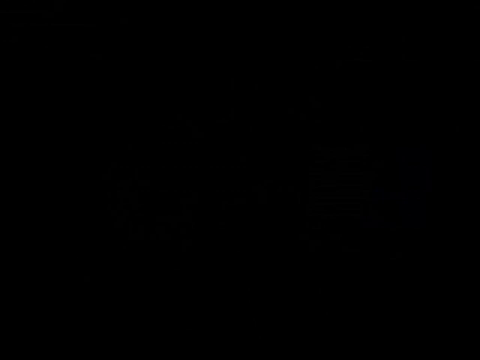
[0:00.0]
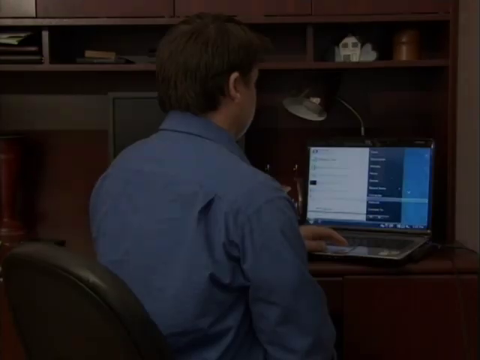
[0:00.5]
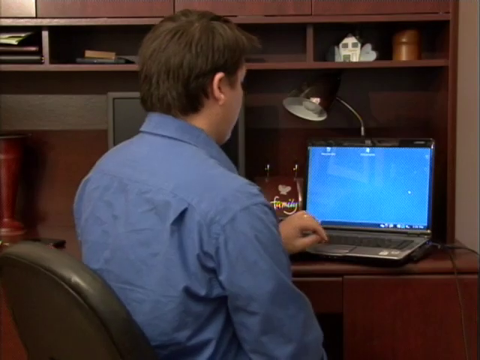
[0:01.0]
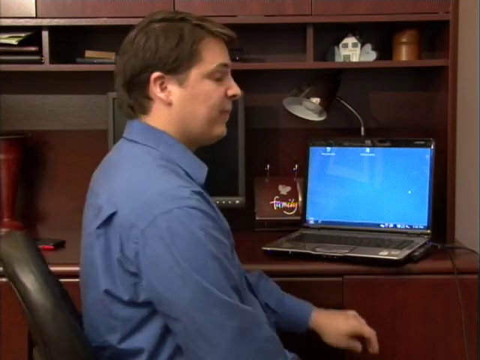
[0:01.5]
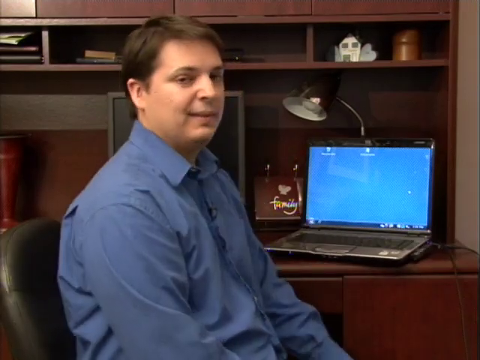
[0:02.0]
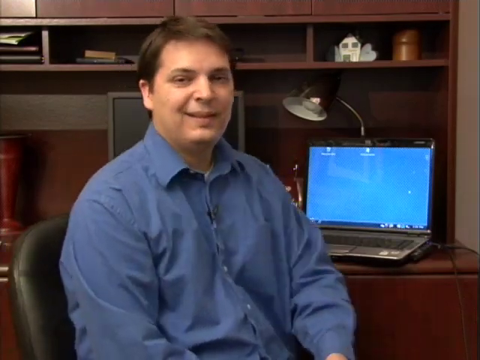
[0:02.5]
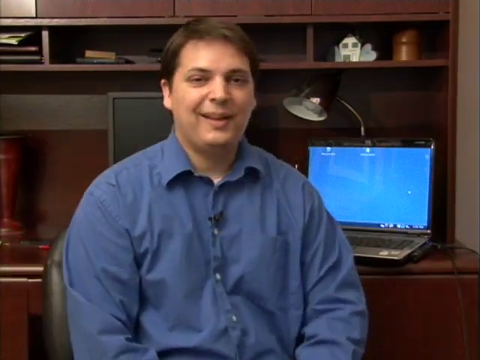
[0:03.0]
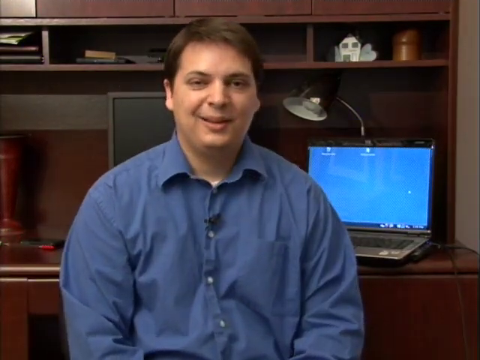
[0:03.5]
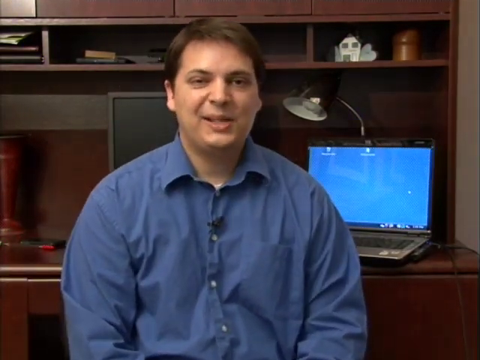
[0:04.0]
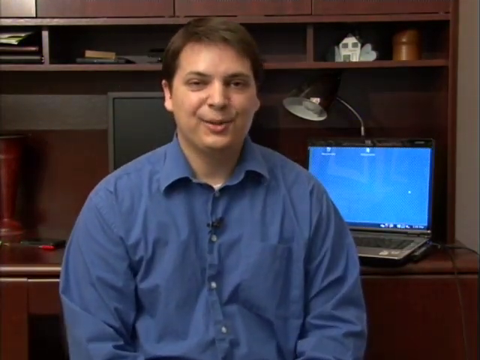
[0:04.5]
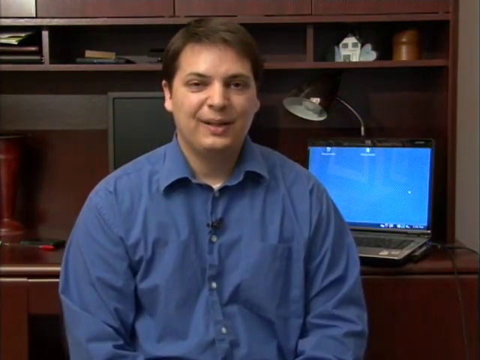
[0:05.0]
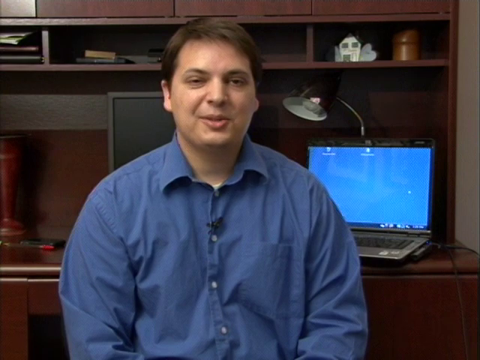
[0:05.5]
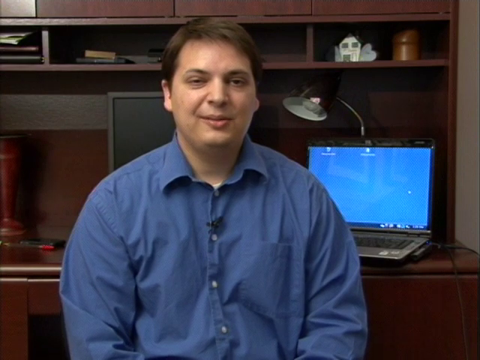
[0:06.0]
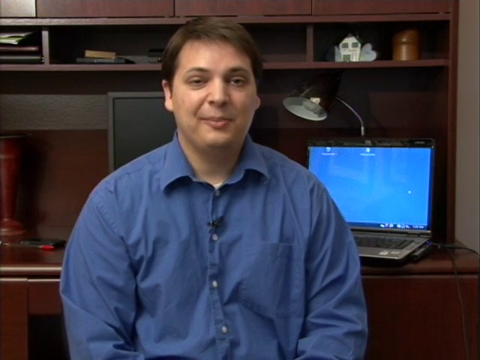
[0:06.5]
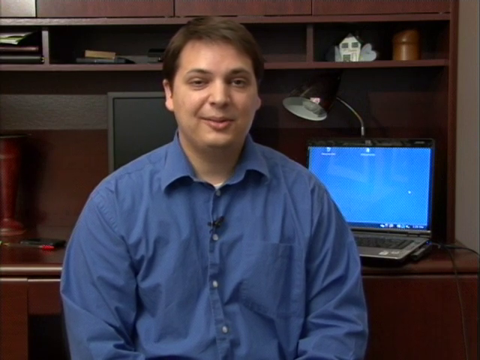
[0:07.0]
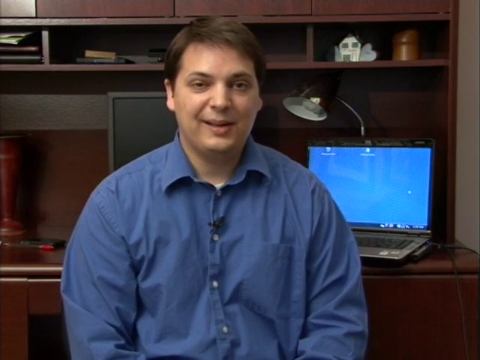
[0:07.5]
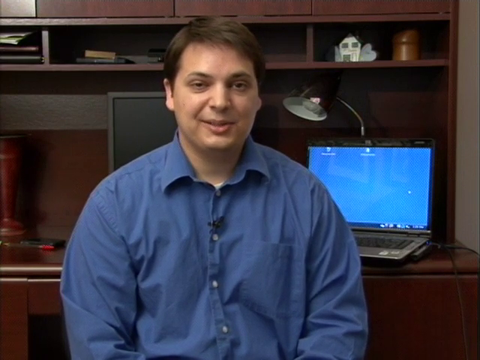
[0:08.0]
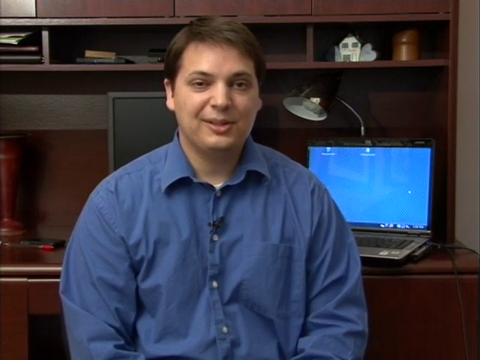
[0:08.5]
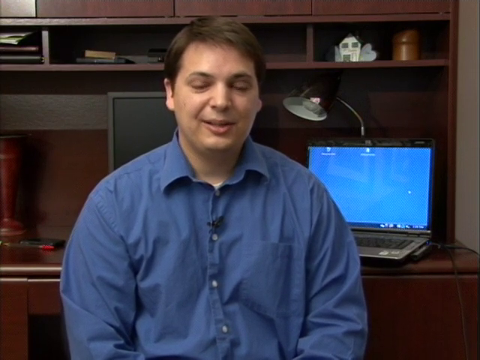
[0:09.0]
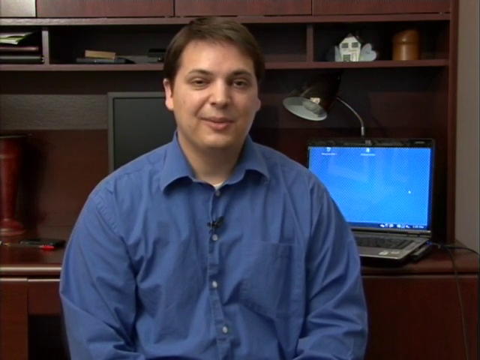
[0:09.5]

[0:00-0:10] A man sits at a large dark wooden desk on a black swivel chair. On the desk are an open laptop, a monitor screen, a lamp and some other items. He wears a blue long-sleeve shirt, has short brown hair, and has a mic attached to the shirt. With his left hand on the laptop keyboard, he slowly swivels the chair around to face the camera and starts talking as though introducing himself.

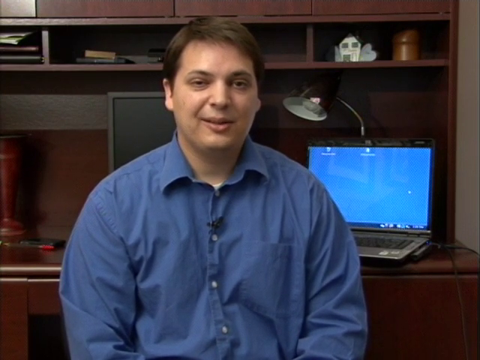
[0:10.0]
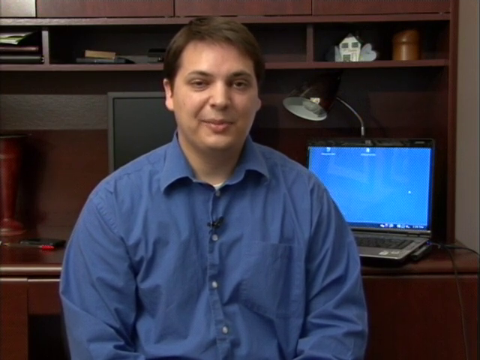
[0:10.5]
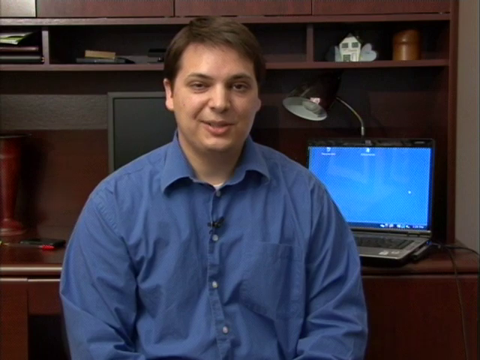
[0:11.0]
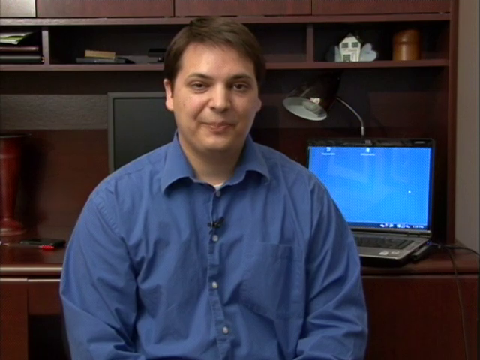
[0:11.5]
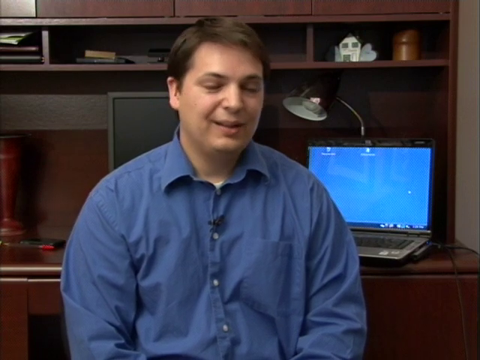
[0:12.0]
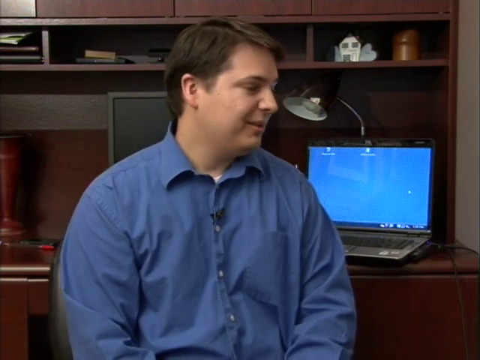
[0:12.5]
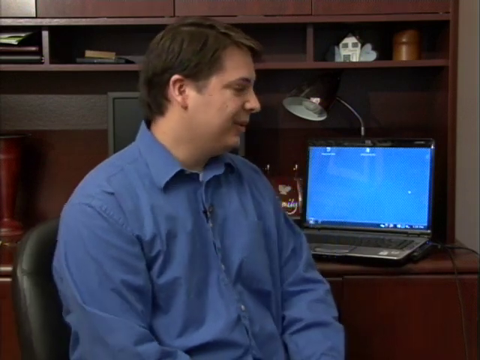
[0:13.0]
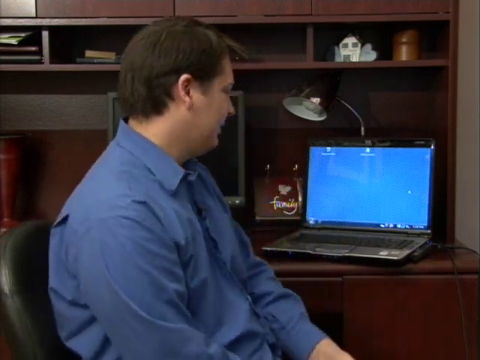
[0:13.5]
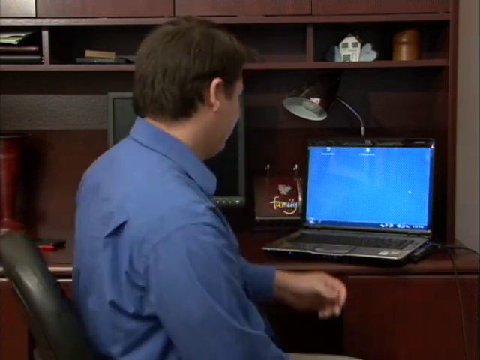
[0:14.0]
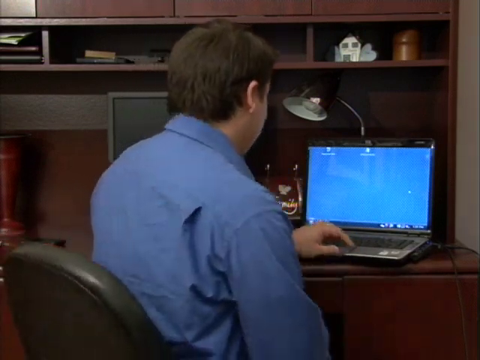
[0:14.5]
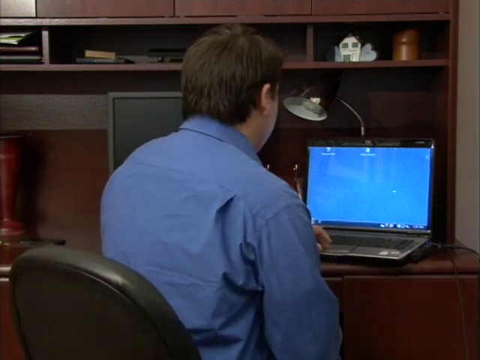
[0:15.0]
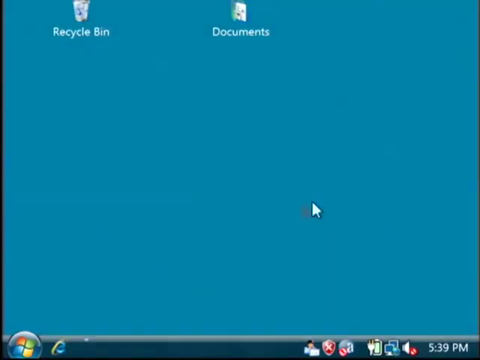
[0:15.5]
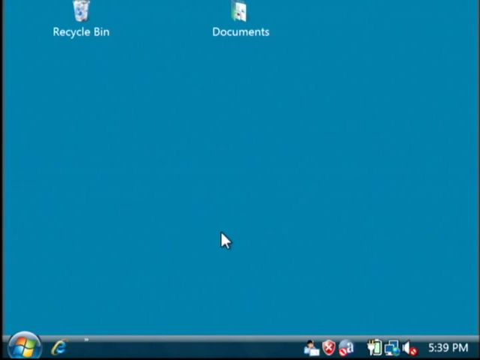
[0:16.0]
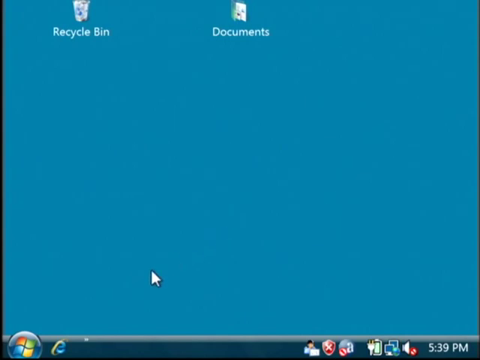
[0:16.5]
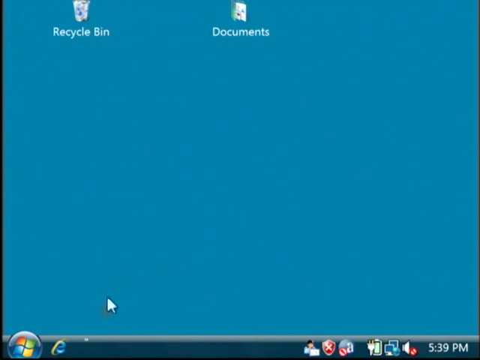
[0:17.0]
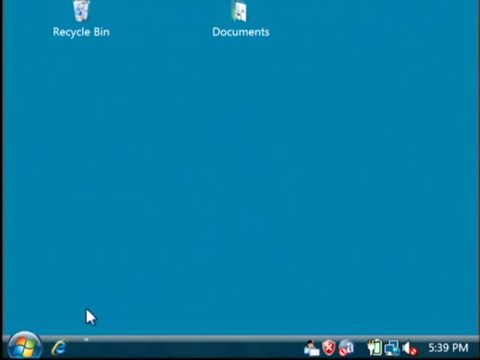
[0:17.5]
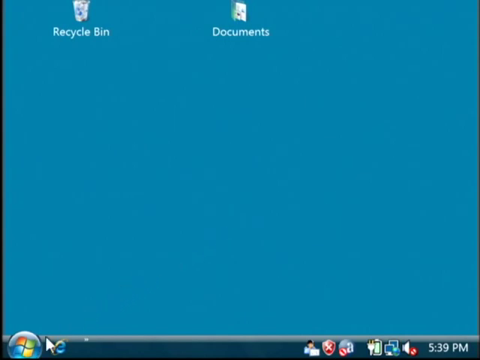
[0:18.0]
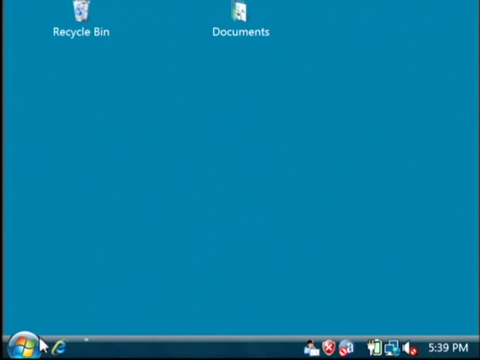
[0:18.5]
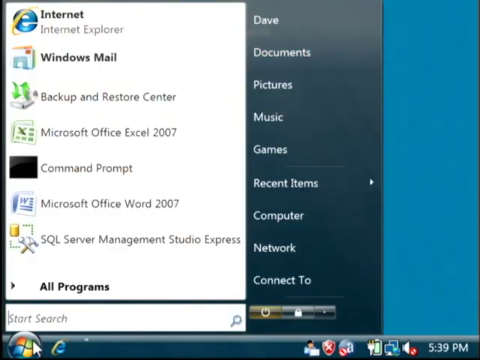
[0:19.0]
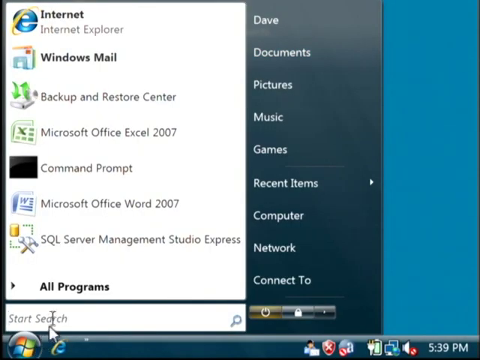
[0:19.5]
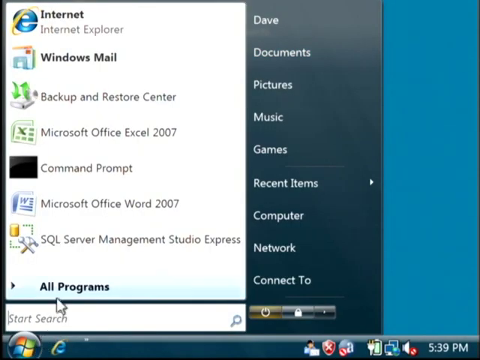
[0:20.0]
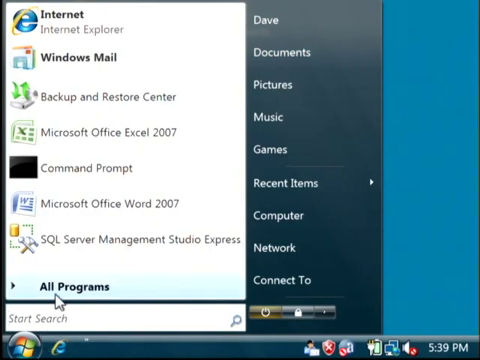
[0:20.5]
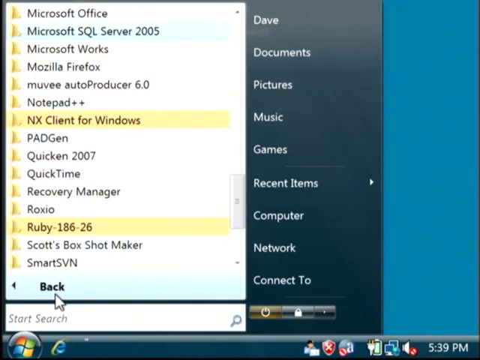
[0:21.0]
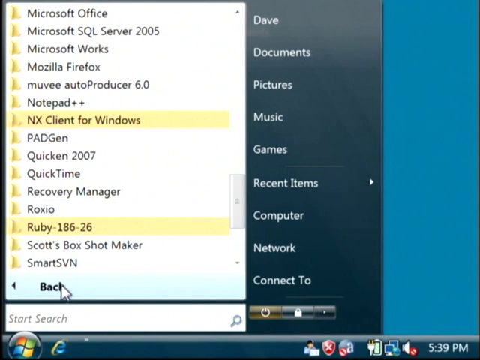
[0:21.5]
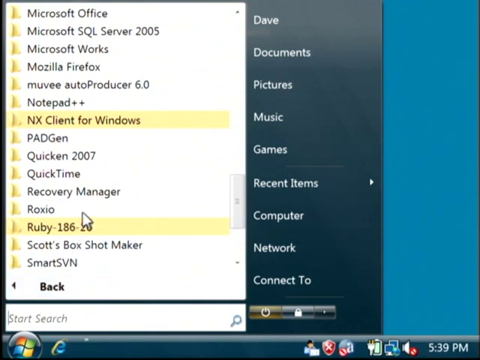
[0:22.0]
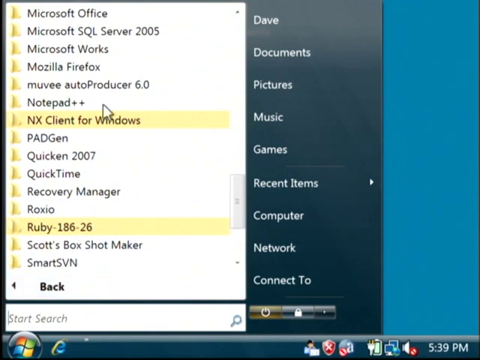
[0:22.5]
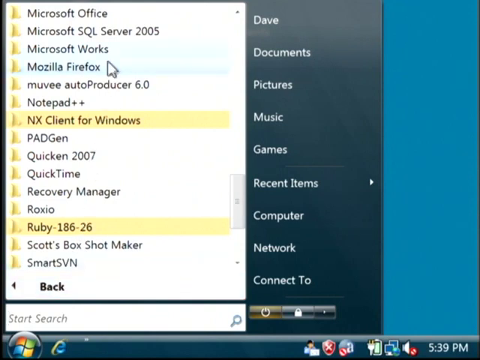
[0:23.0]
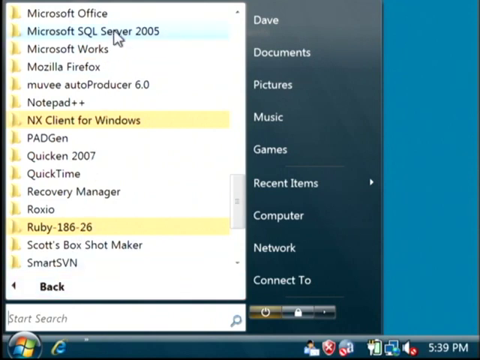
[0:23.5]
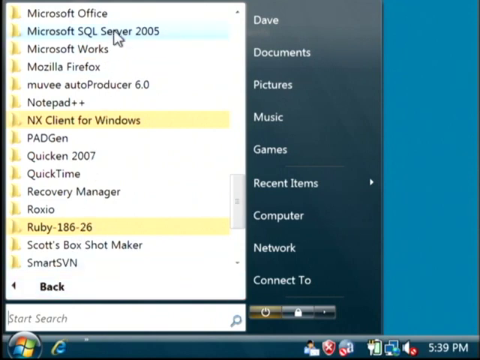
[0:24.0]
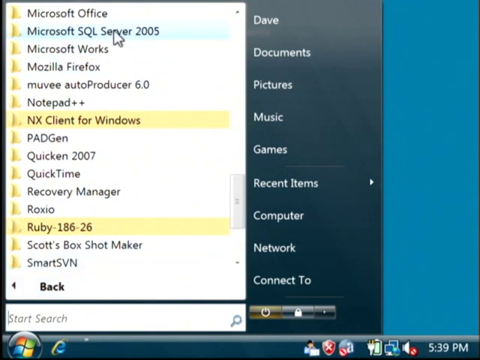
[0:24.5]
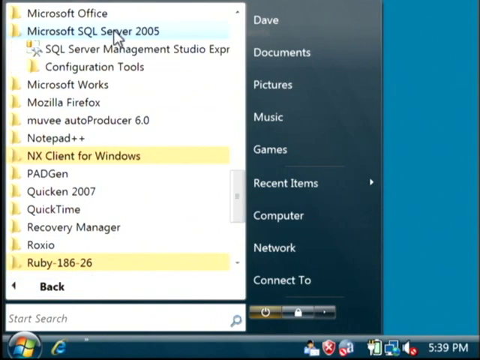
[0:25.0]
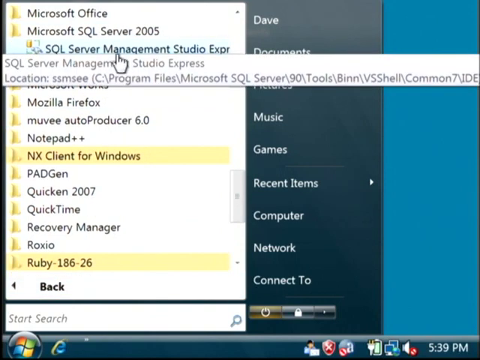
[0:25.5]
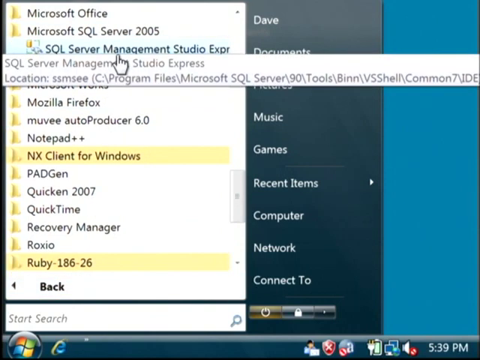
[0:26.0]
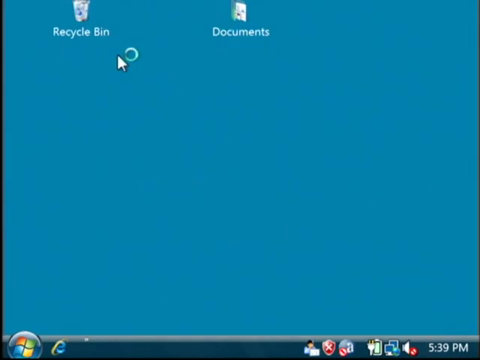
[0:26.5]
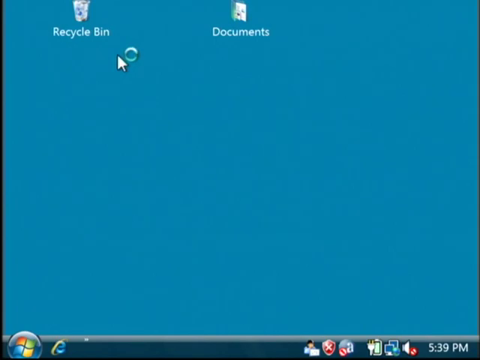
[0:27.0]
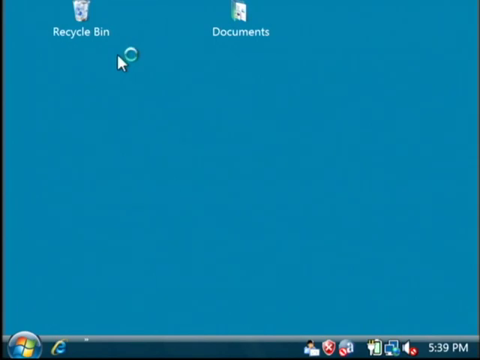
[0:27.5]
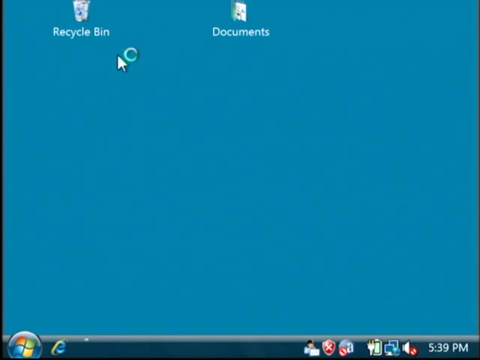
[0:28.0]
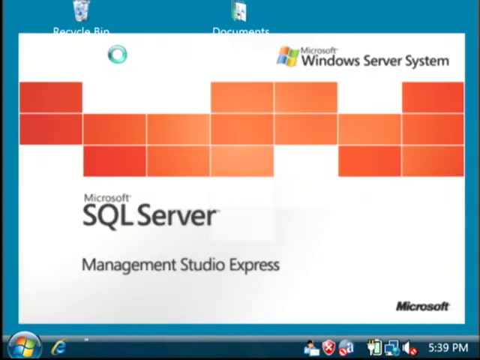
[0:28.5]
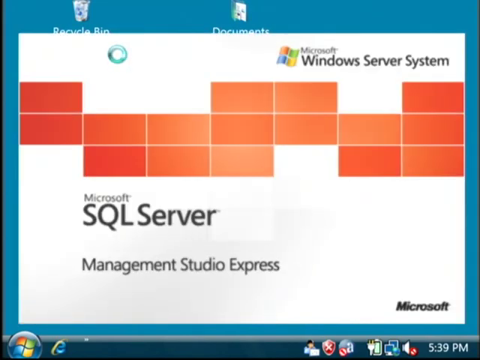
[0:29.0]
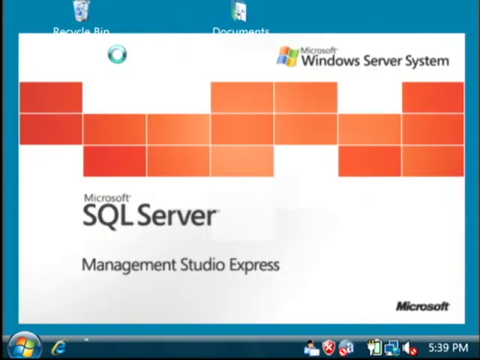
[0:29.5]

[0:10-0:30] Inside a house or office environment, a man sits facing the camera. Behind him is a large dark wooden desk with an open laptop that is powered on. He talks toward the camera, then uses his black swivel chair to swivel around so he is facing the laptop again, bringing his hand up and placing it on the laptop keyboard. The video transitions to a computer screen showing the desktop background. The cursor moves downward toward the left-hand corner, to the Windows start button, and the Windows menu appears. The cursor selects the all programs button, which opens a list of programs in a view of folders. The cursor moves up to Microsoft SQL Server 2005 and clicks it, expanding the folder options, where the application SQL Server Management Studio is visible.